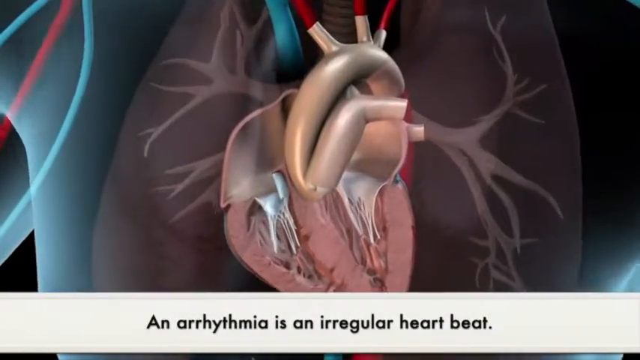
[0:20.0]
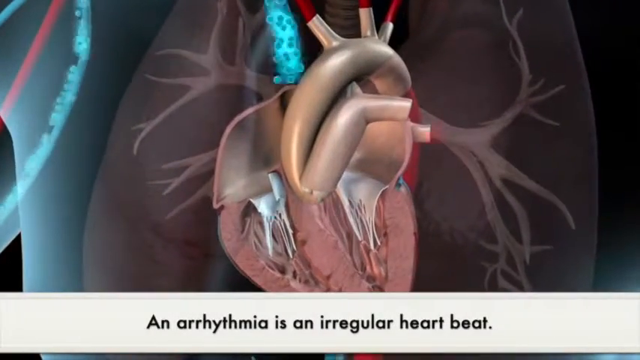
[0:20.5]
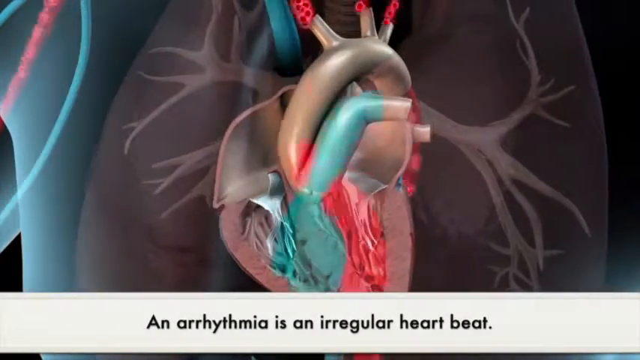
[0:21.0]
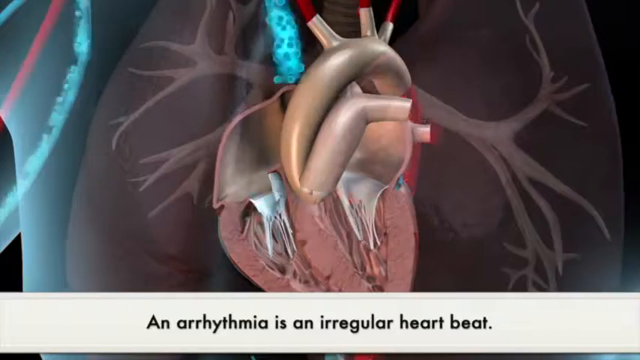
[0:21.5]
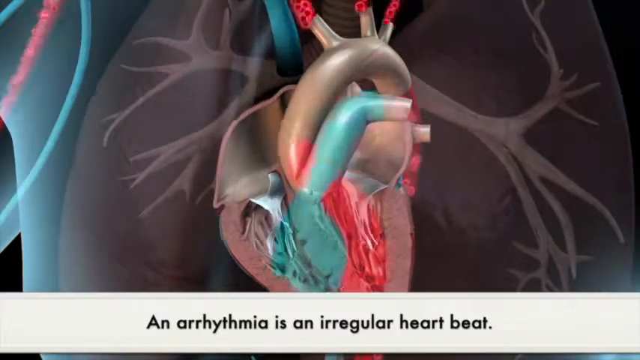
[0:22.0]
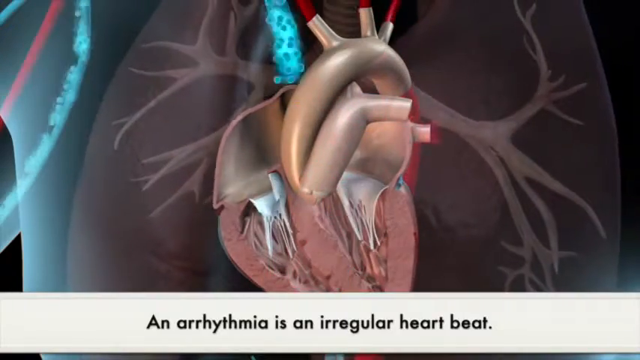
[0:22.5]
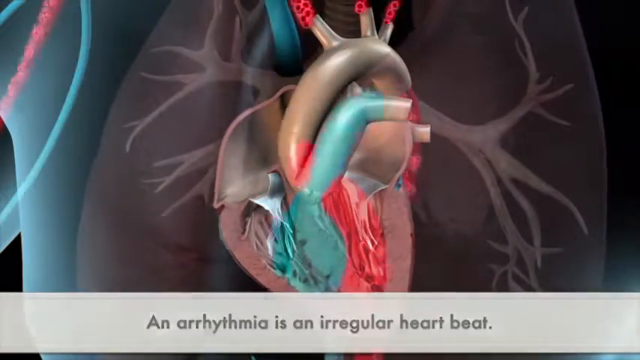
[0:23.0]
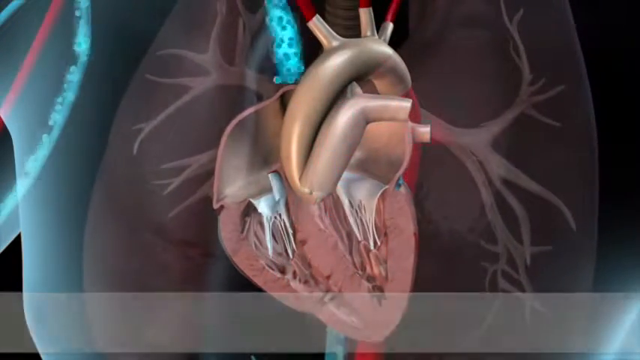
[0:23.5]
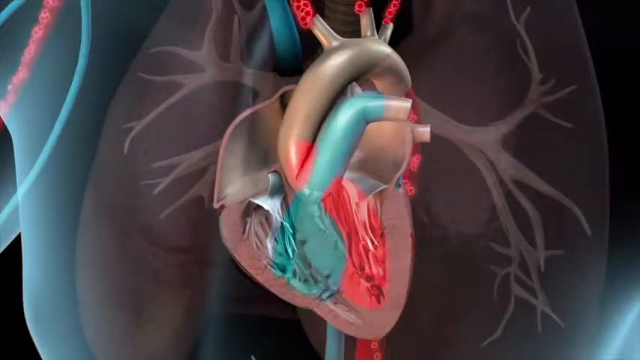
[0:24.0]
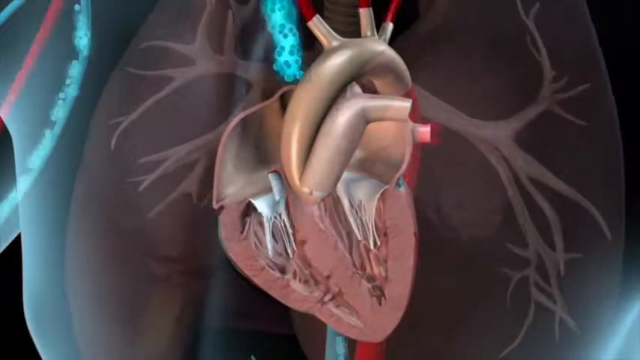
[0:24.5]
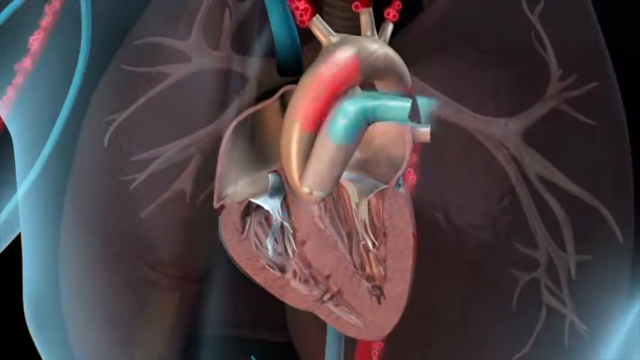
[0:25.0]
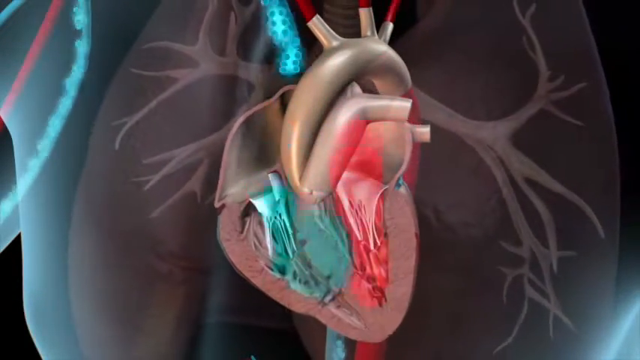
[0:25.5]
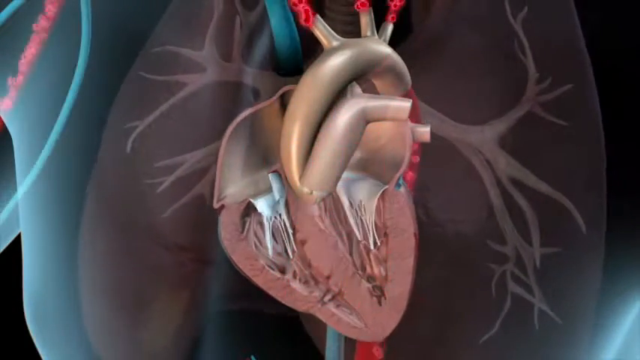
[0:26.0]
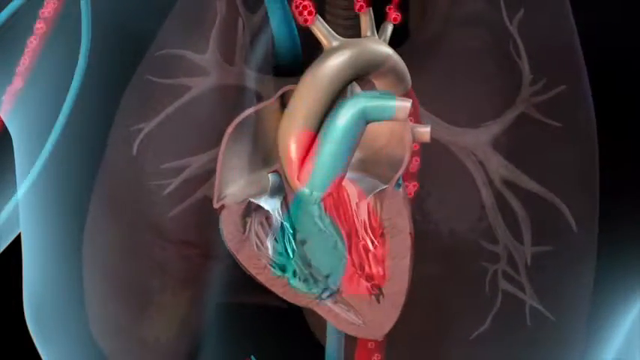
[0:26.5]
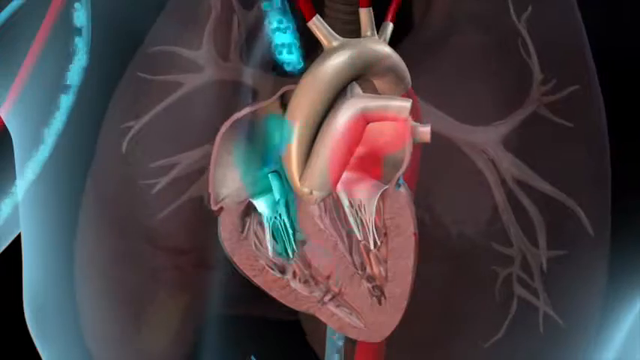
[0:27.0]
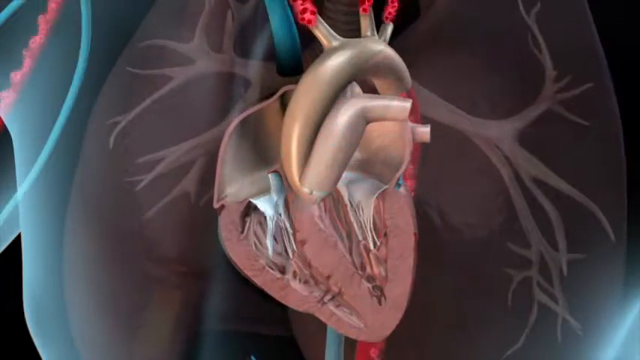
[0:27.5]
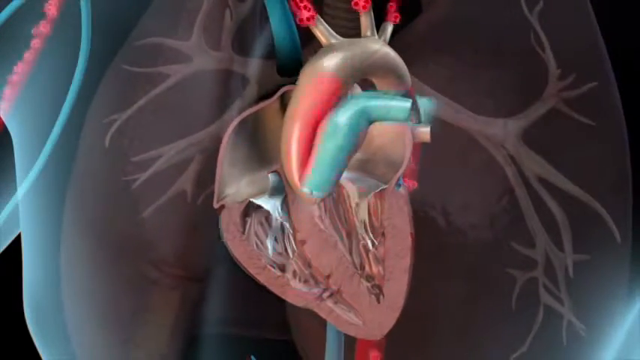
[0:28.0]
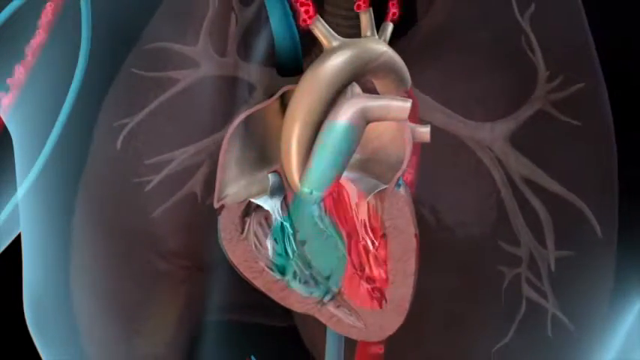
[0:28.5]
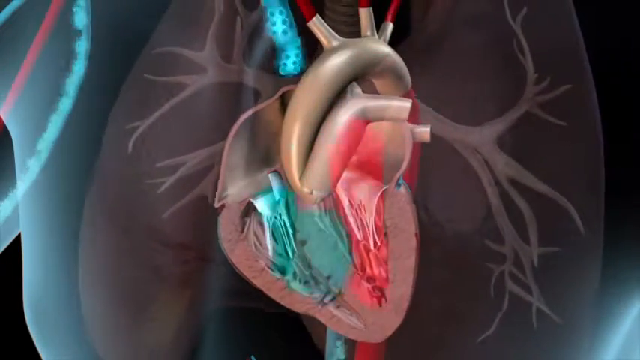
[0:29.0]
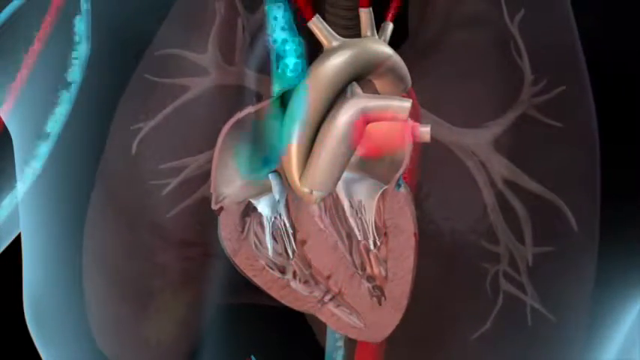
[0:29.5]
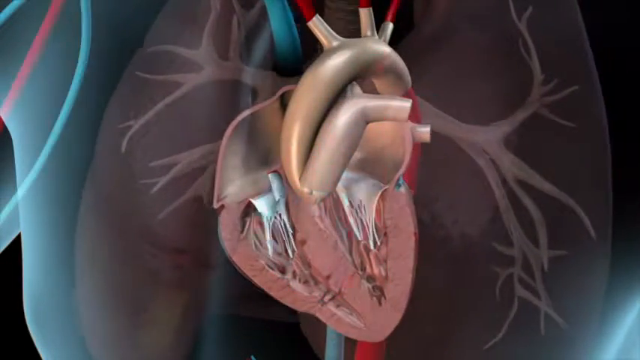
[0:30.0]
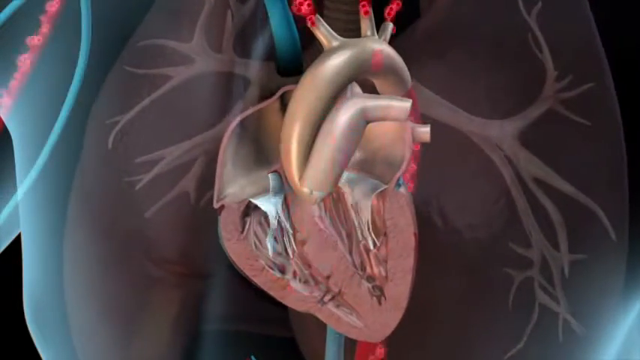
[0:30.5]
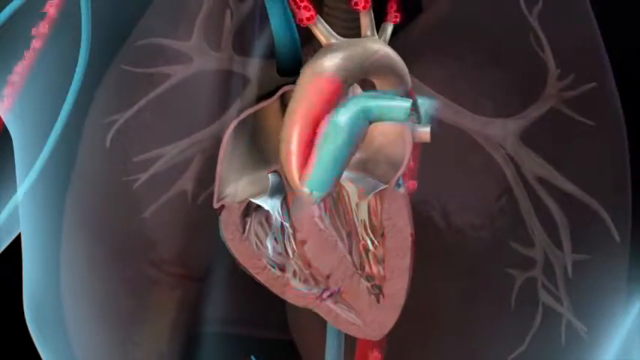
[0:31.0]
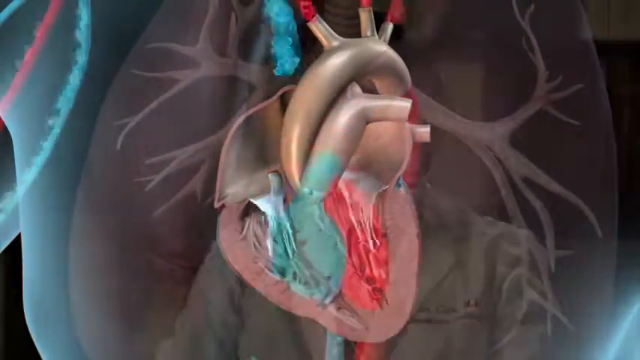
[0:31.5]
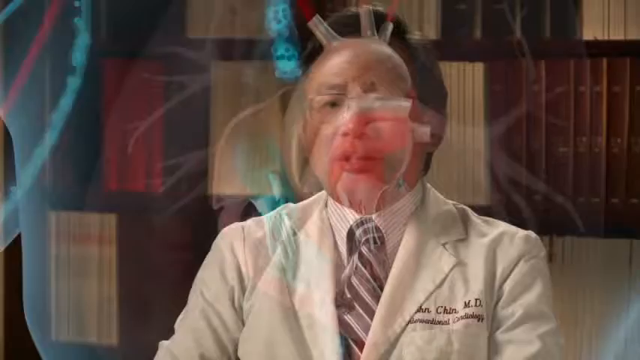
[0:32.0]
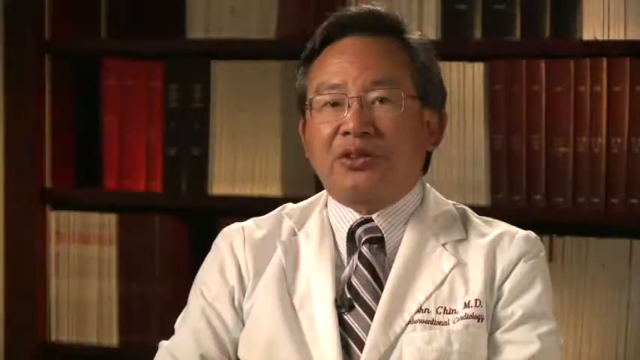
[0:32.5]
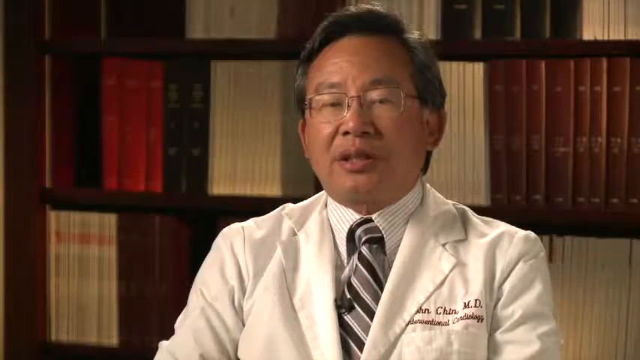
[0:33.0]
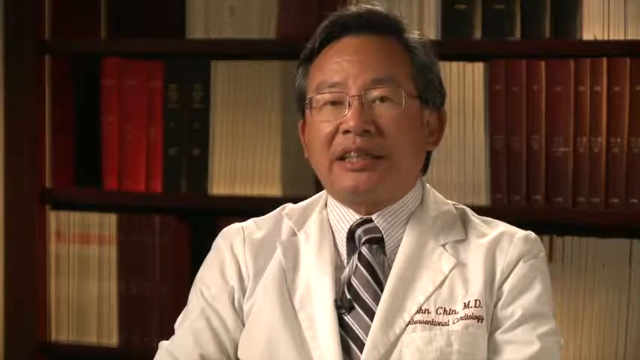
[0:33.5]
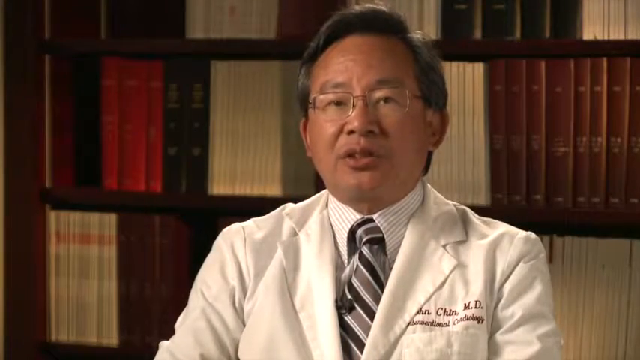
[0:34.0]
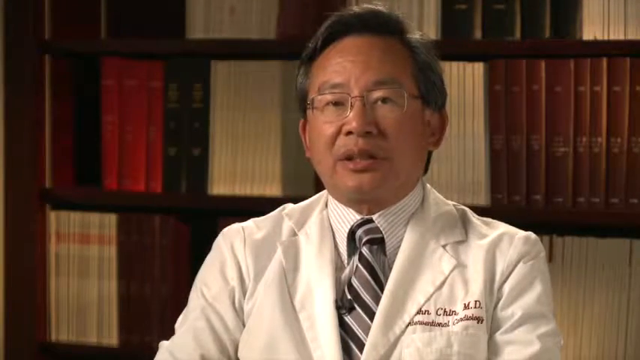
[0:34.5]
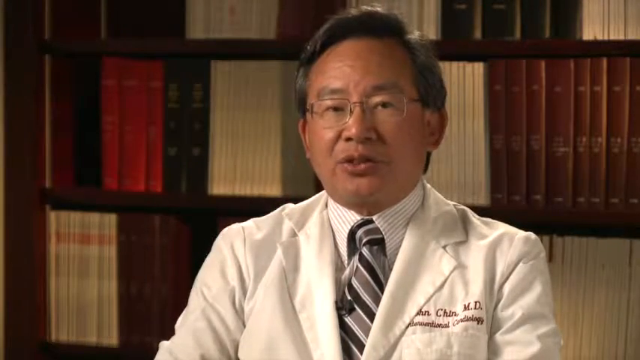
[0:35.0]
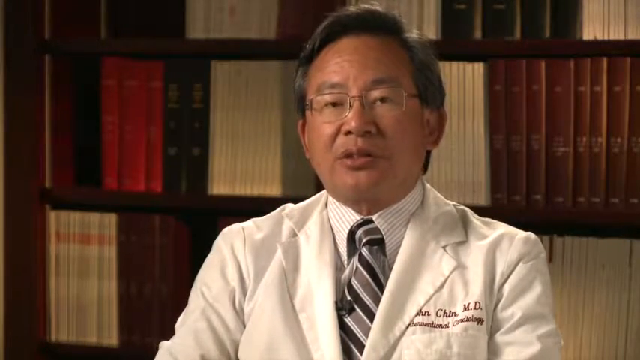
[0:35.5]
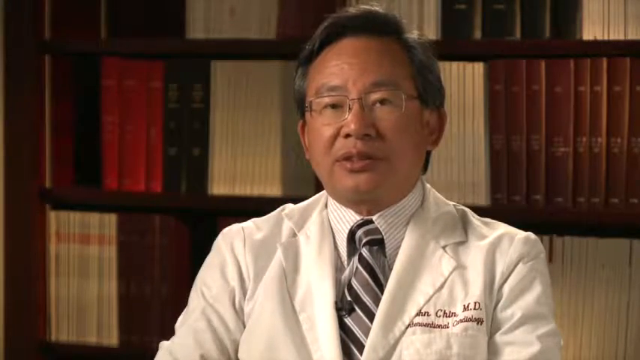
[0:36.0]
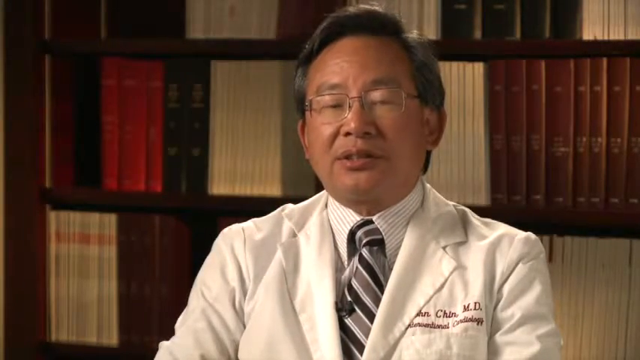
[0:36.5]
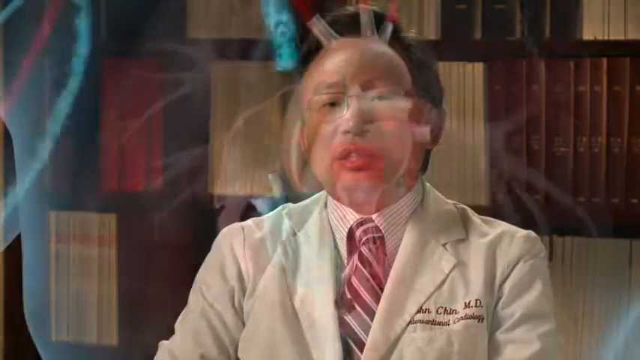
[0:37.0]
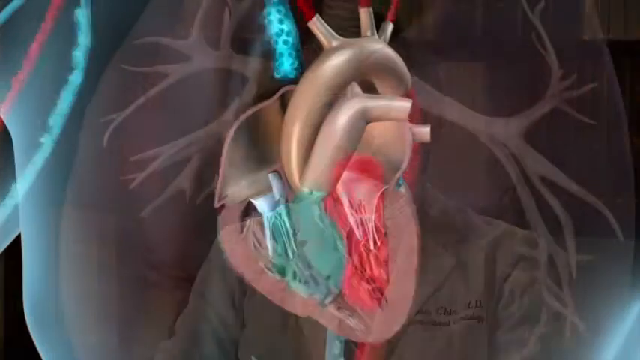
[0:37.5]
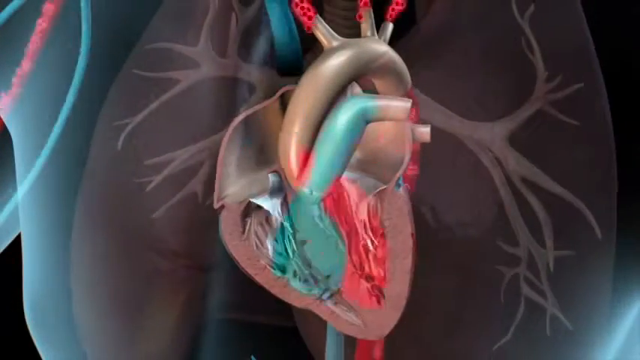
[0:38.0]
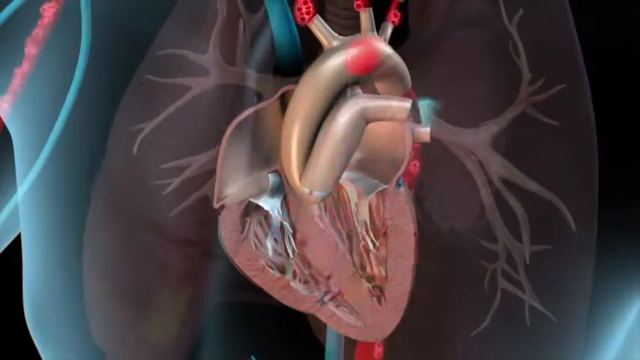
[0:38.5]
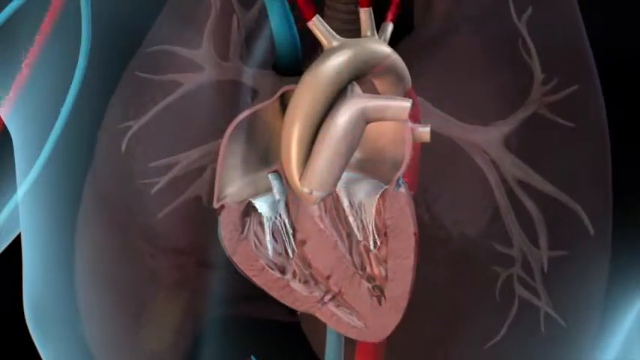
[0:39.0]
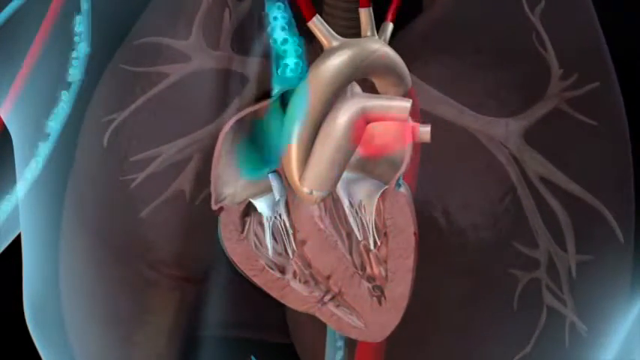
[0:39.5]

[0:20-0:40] An animation shows a heart. Faint outlines are visible where the chest of the body would be, along with blood vessels along the back. In the foreground are the chambers of the heart, with three blood vessels leading up toward the top and one leading in on the left-hand side. Along the bottom, a text box states "an arrhythmia is an irregular heartbeat." Blue blood moves into the heart through the larger vein, then red blood comes into the heart through a vein in the back, and red blood leaves the heart through the three arteries on the top. This pattern repeats multiple times. The view then fades out to show a doctor speaking. He is sitting indoors in a study with books behind him and wears the traditional white coat. He calmly faces the camera, giving his lecture in an informative and measured tone. After he speaks for a few seconds, the animation reappears, this time with the red and the blue blood moving at the same time rather than sequentially.